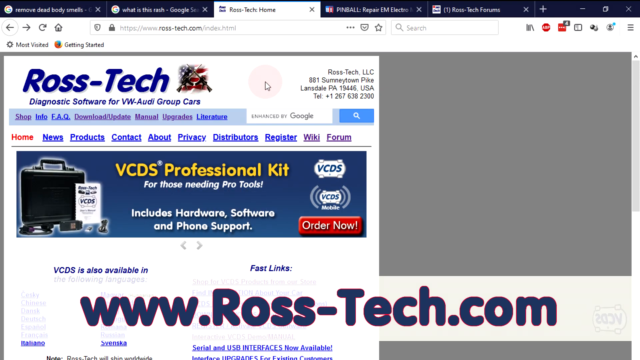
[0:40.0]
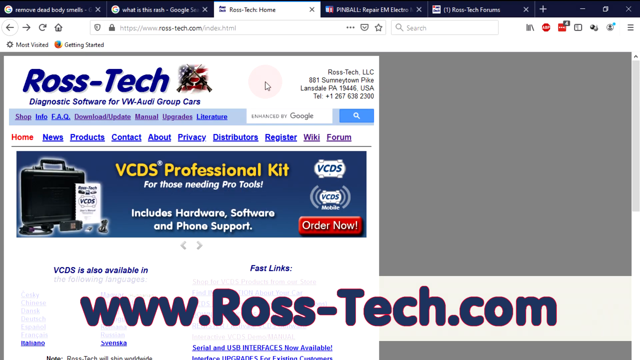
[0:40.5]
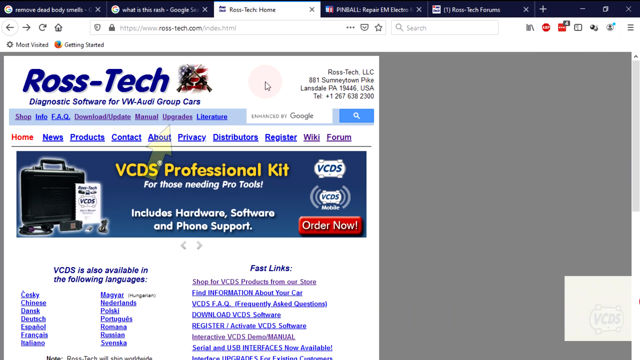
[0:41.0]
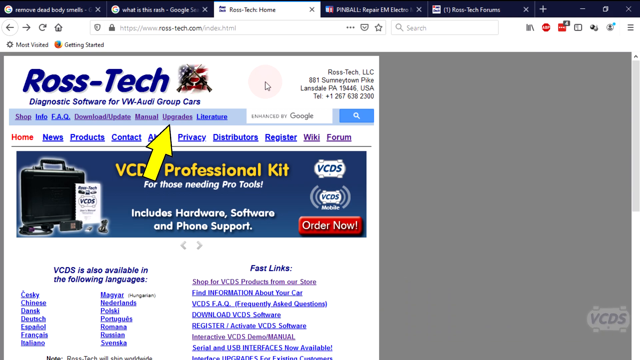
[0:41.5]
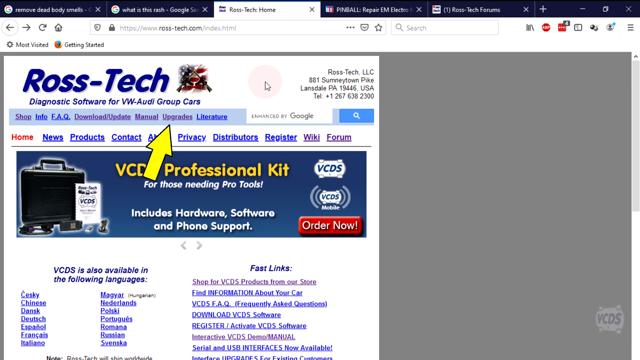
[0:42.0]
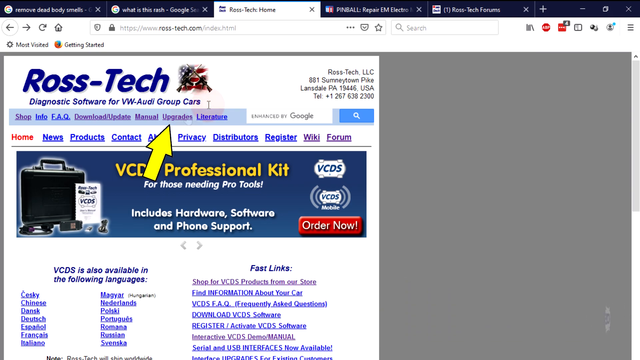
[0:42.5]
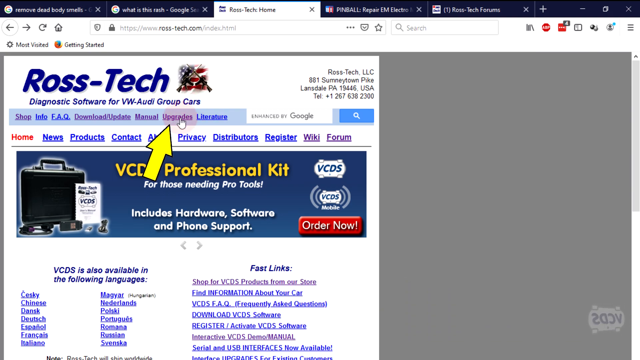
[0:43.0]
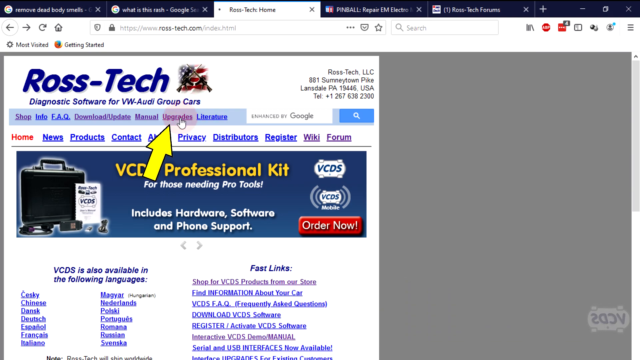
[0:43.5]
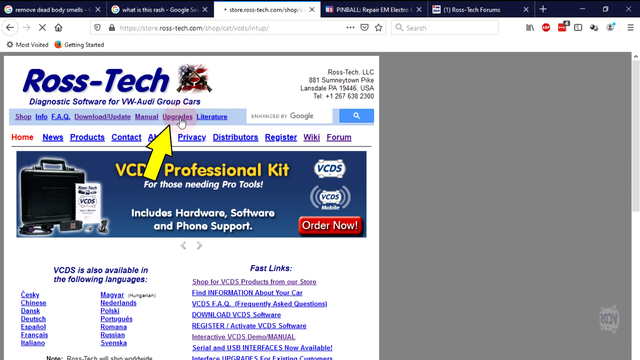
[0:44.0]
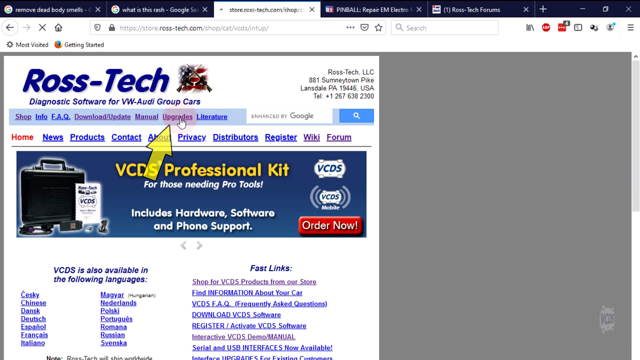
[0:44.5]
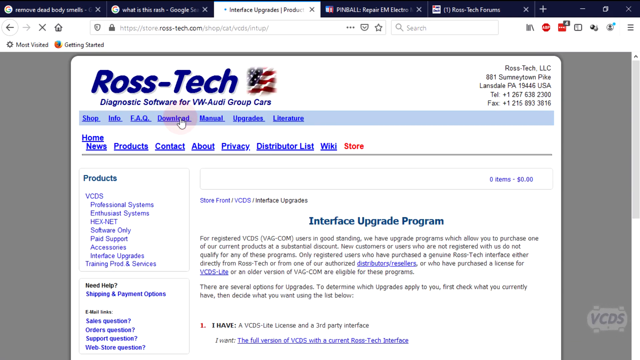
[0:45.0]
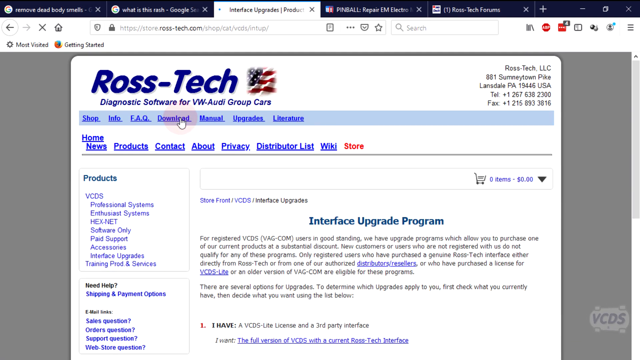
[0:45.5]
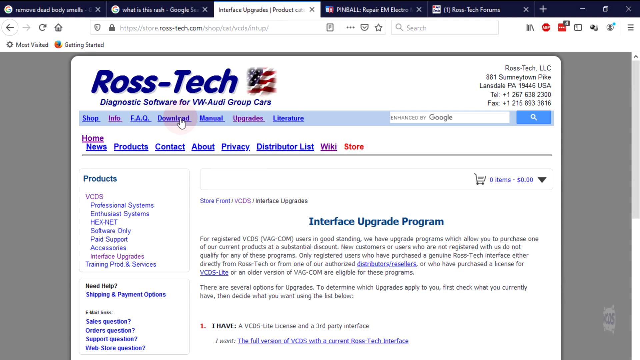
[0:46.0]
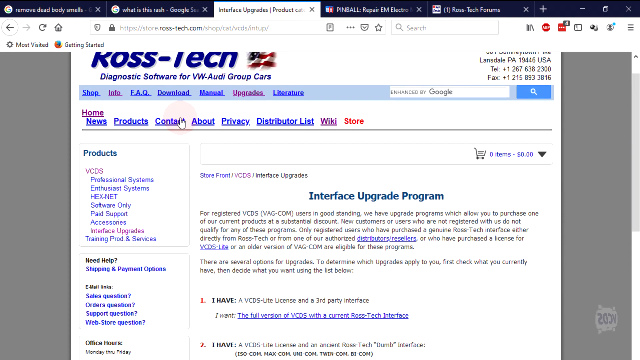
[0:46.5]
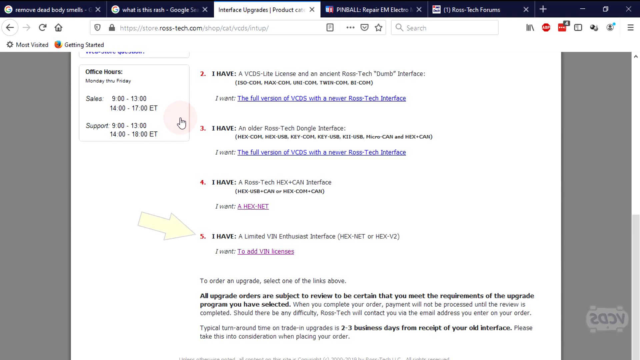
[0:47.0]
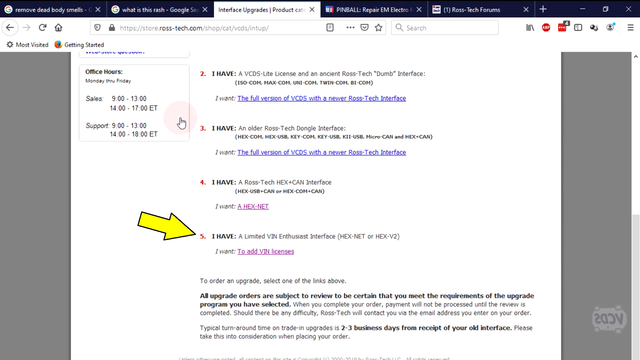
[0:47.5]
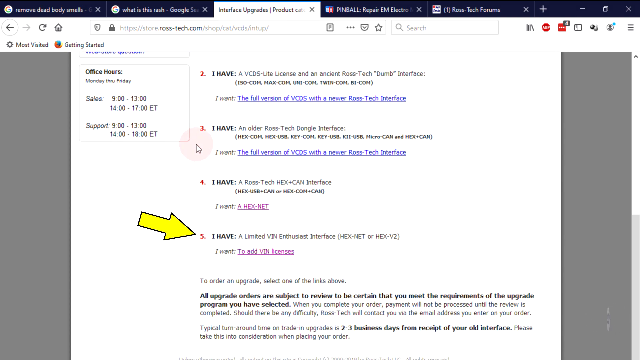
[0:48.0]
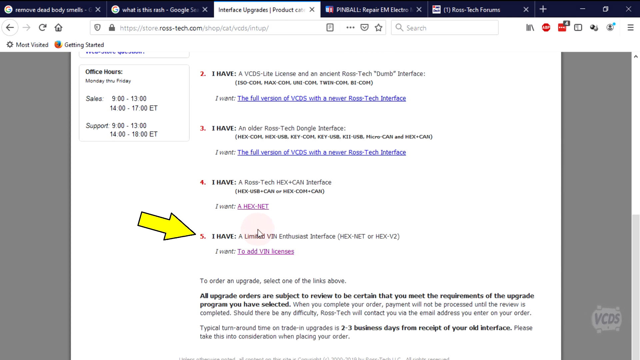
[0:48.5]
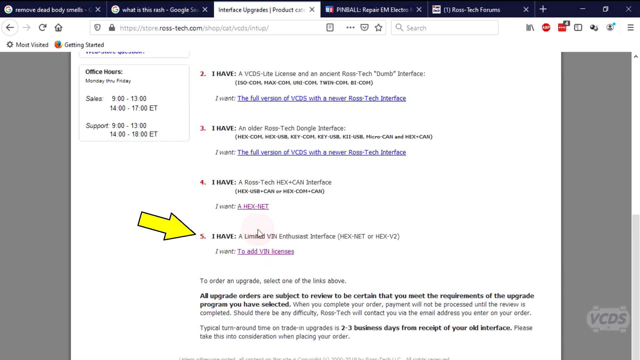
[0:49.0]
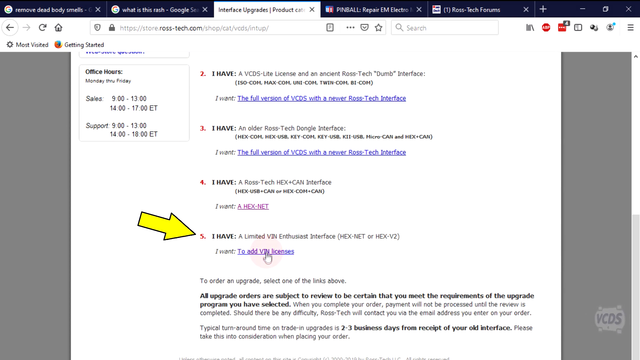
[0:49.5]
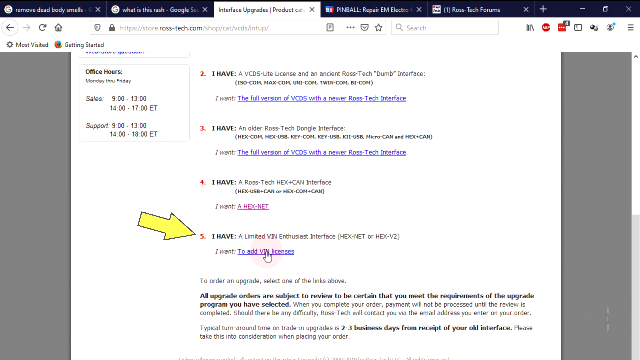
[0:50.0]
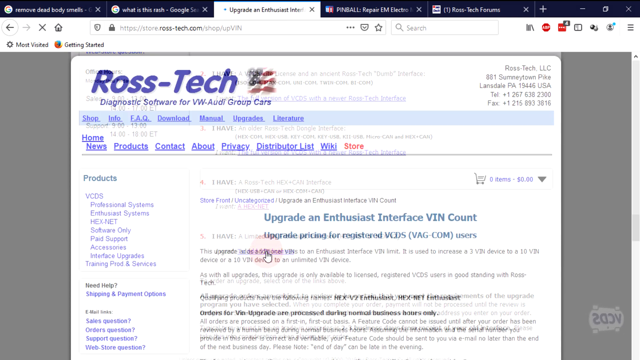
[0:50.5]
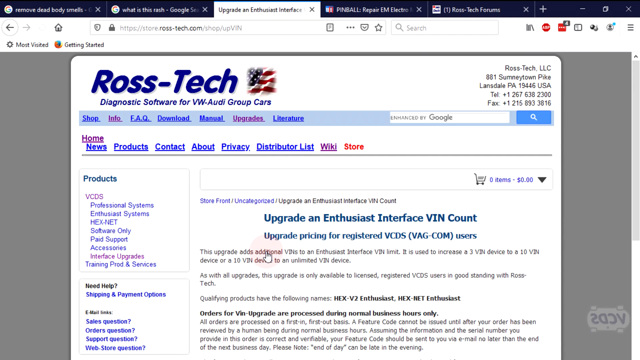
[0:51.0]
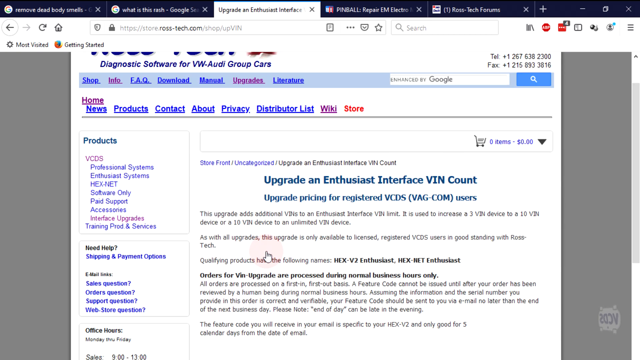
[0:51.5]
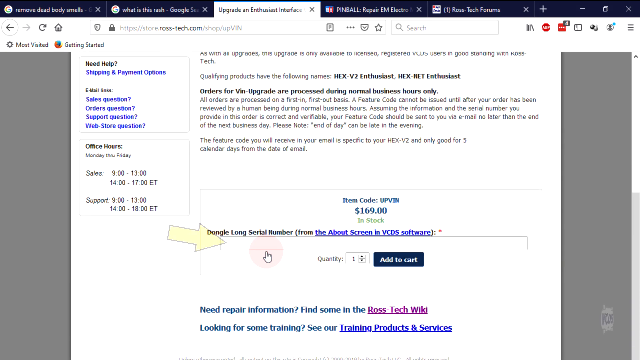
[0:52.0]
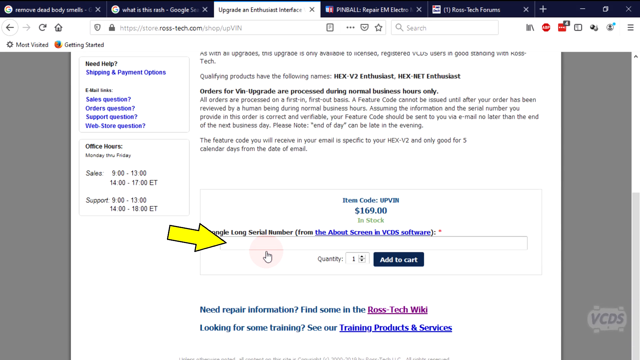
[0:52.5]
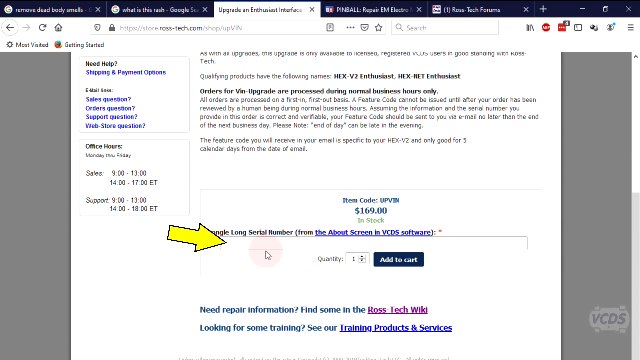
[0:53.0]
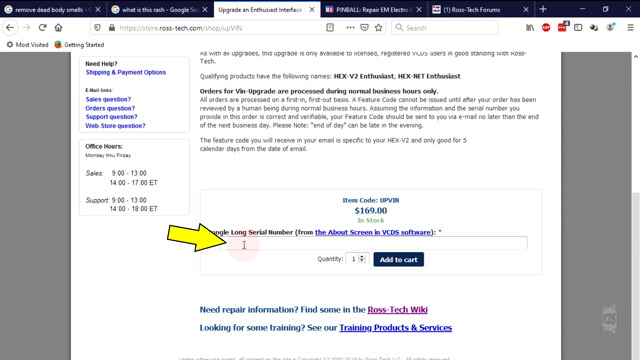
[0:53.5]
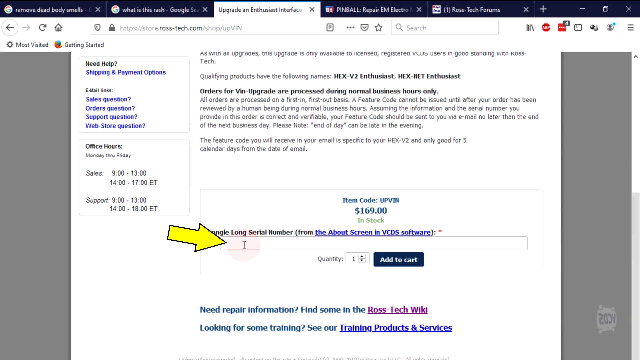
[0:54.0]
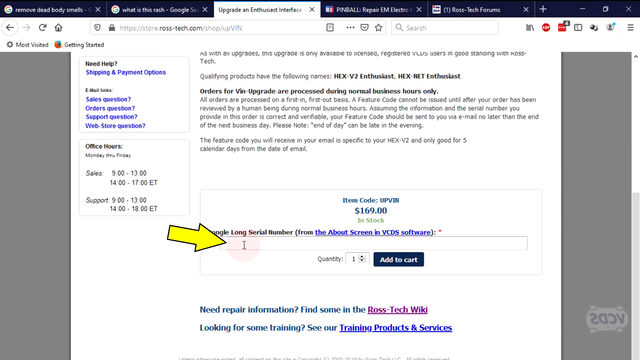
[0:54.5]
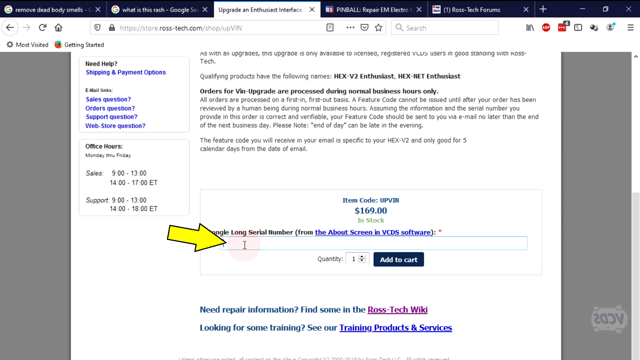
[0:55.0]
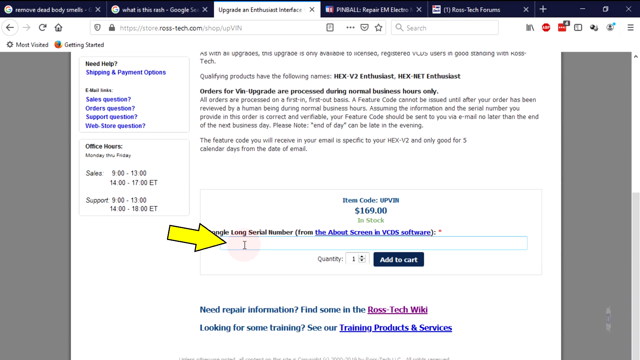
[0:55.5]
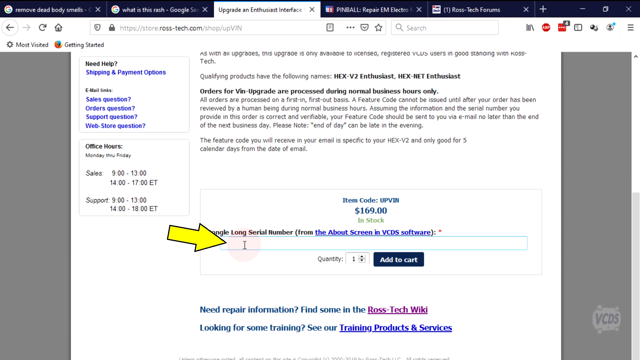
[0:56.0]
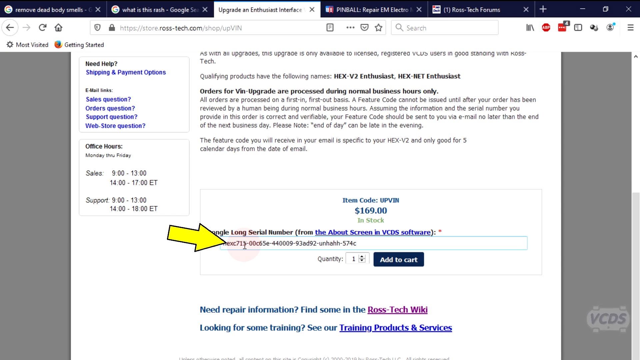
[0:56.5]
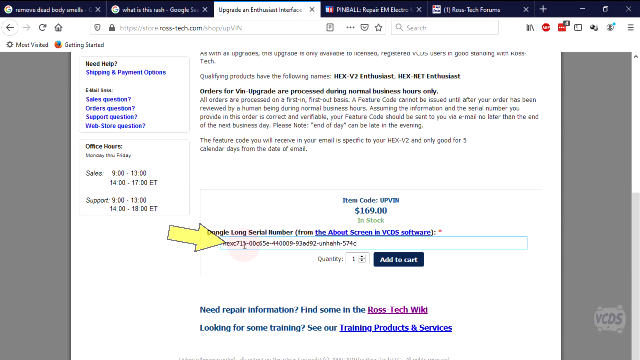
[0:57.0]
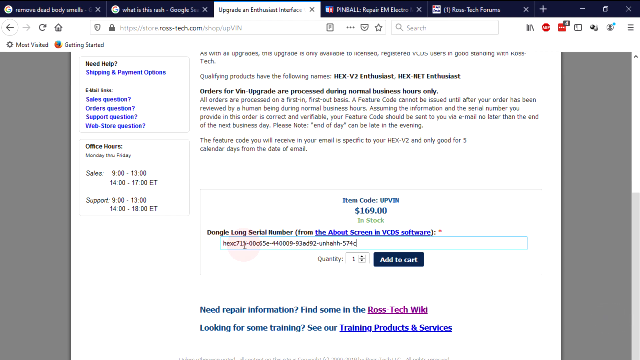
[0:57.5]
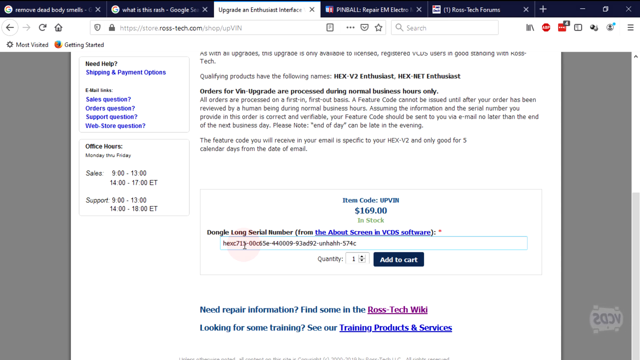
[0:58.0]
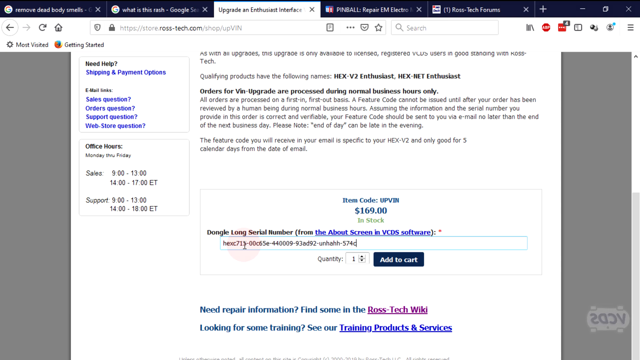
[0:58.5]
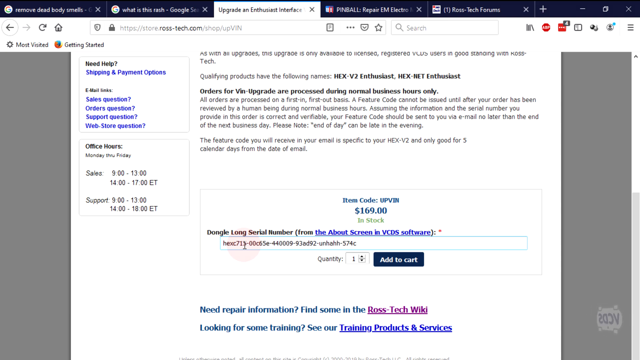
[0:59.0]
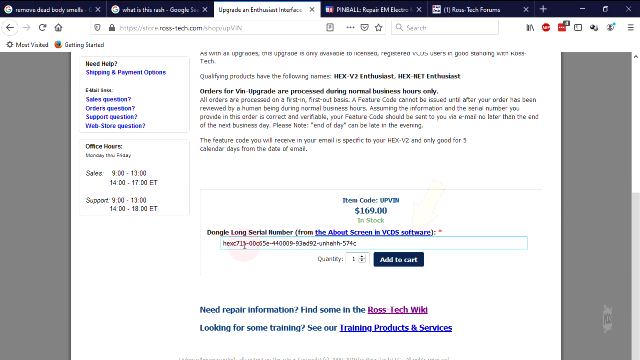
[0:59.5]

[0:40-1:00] At the bottom of the screen, "www.rosstech.com" appears in bold blue text. In a white box covering the upper left and the top two-thirds of the frame are Ross Tech information and an ad, along with a computer monitor showing the page open at the address "rosstech.com/index.html." Some other tabs are also there, such as a pinball game. A yellow arrow pops up pointing to the word "upgrades" on the Ross Tech site. After it is clicked, a new page opens, and the currently open tab reads "interface upgrades product catalog." The options are numbered one through five, and the arrow points at number five, which reads "I have a limited VIN enthusiast interface."